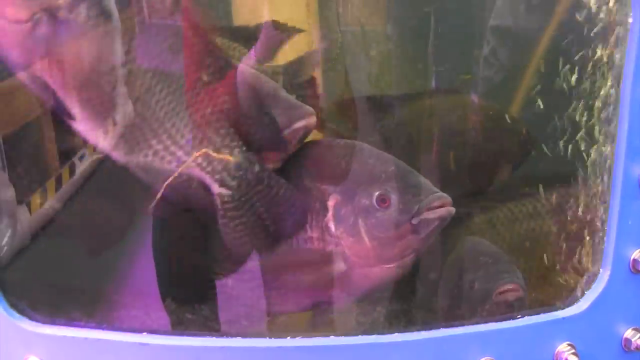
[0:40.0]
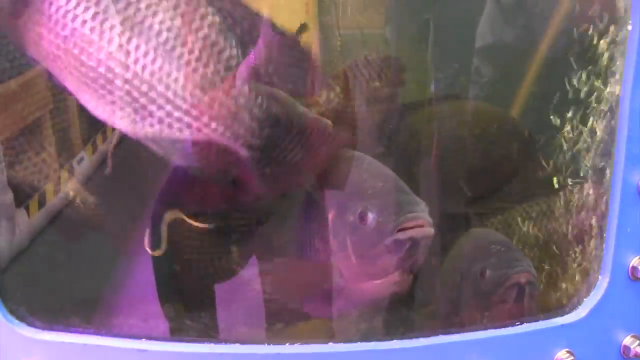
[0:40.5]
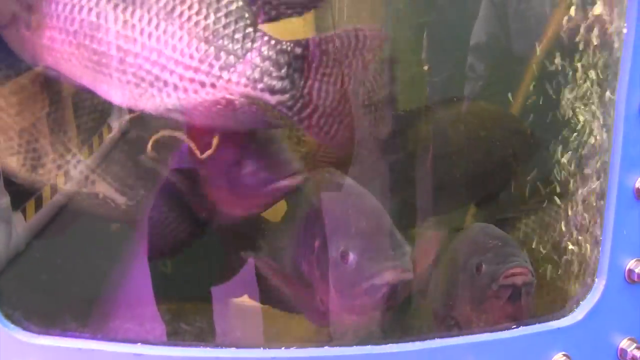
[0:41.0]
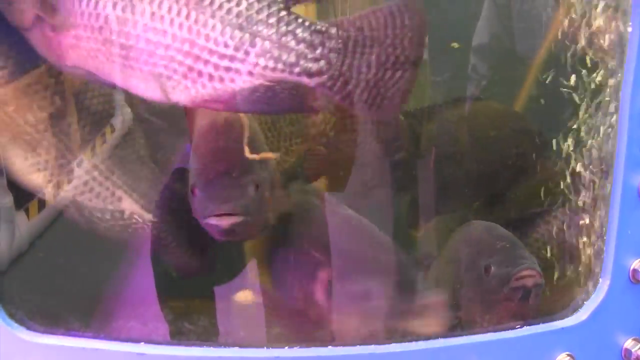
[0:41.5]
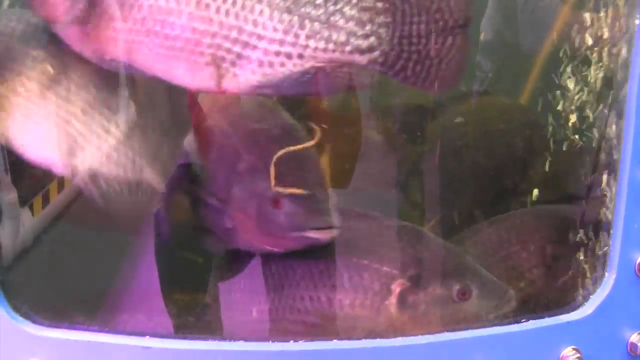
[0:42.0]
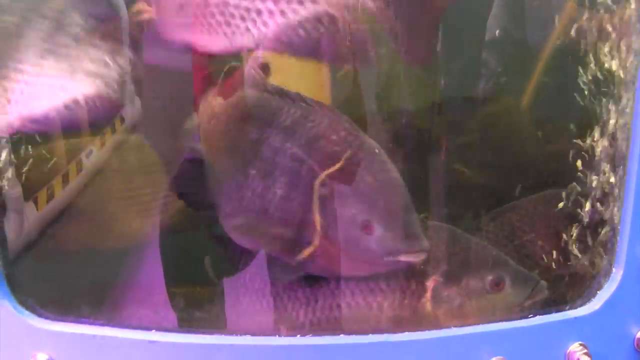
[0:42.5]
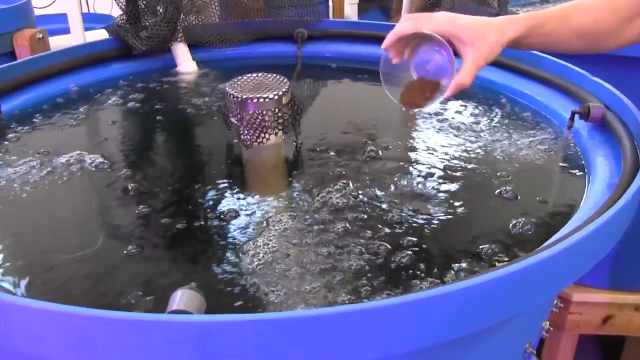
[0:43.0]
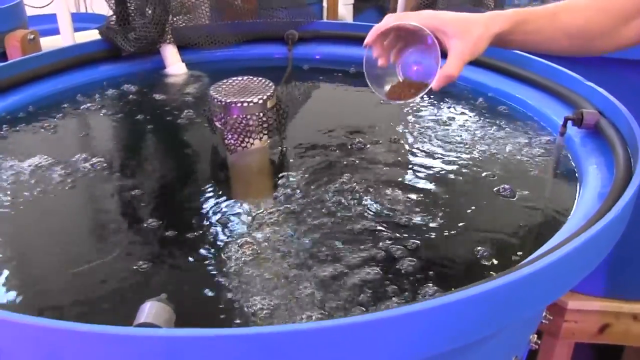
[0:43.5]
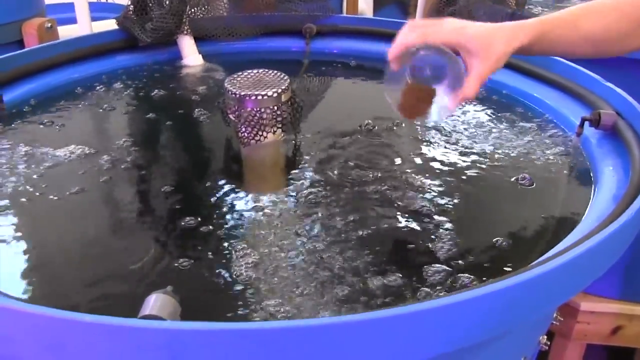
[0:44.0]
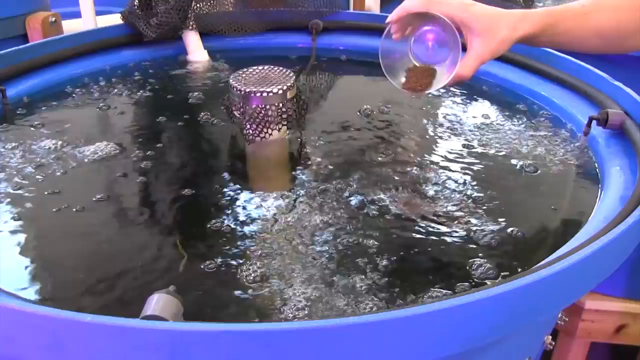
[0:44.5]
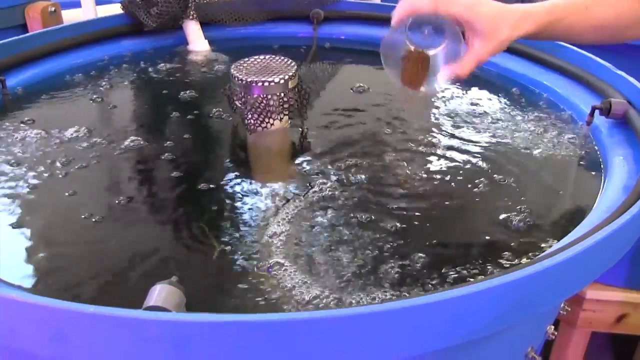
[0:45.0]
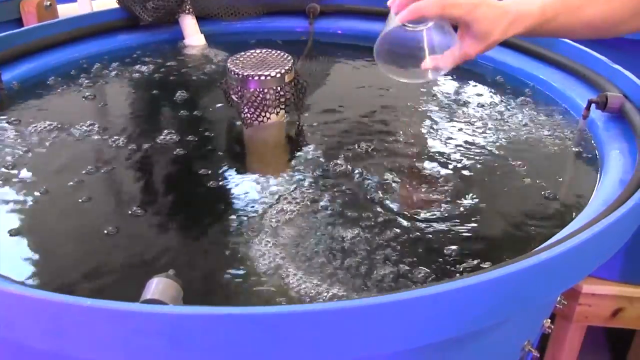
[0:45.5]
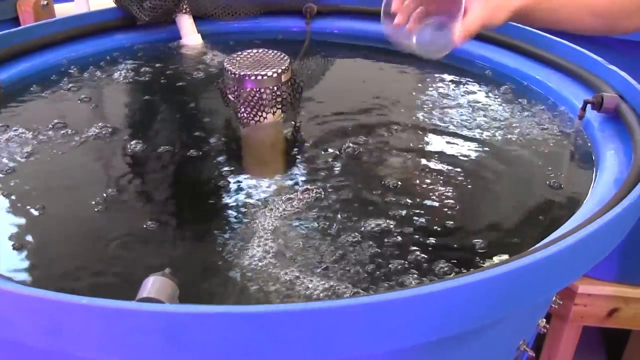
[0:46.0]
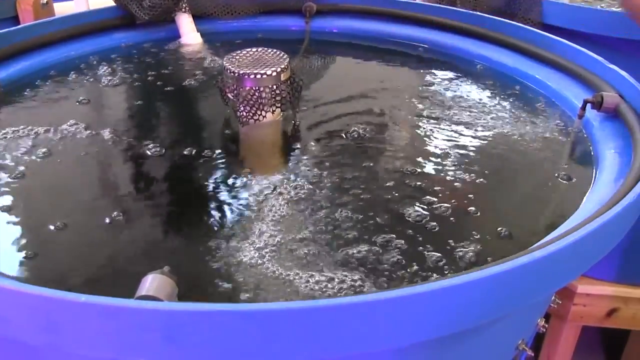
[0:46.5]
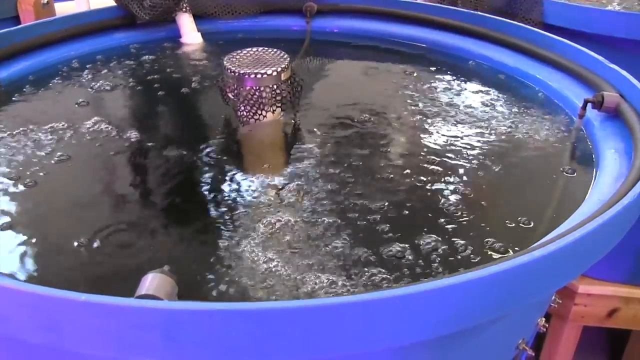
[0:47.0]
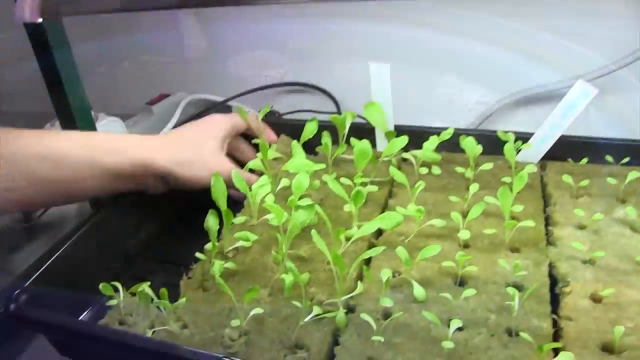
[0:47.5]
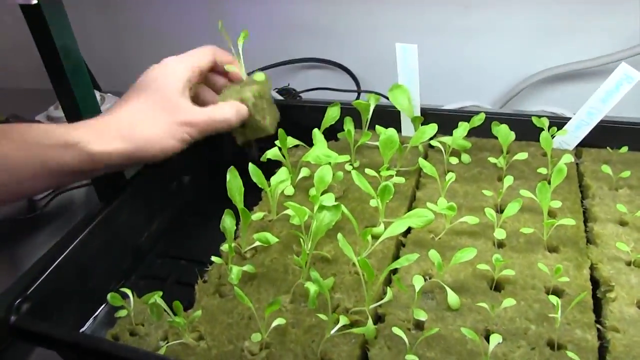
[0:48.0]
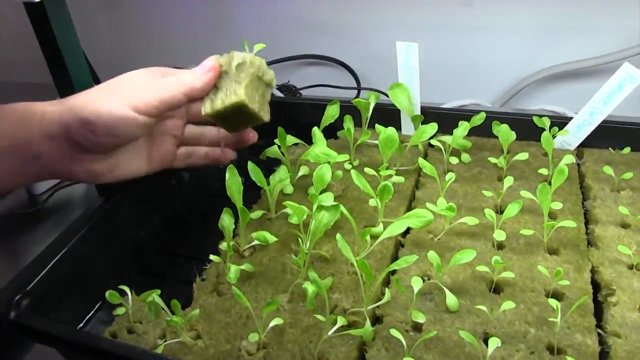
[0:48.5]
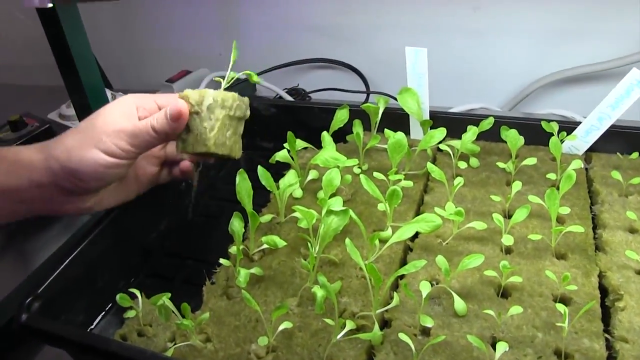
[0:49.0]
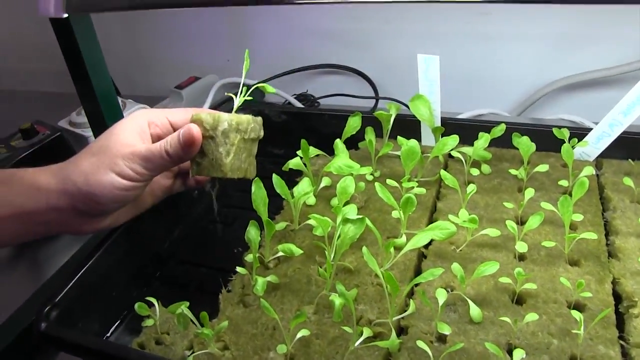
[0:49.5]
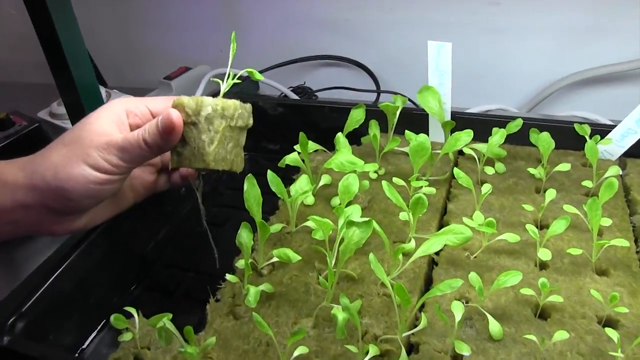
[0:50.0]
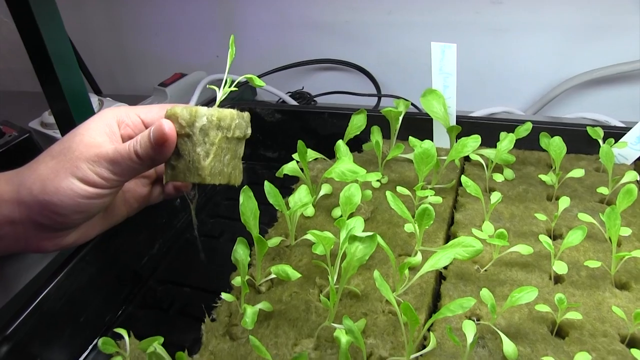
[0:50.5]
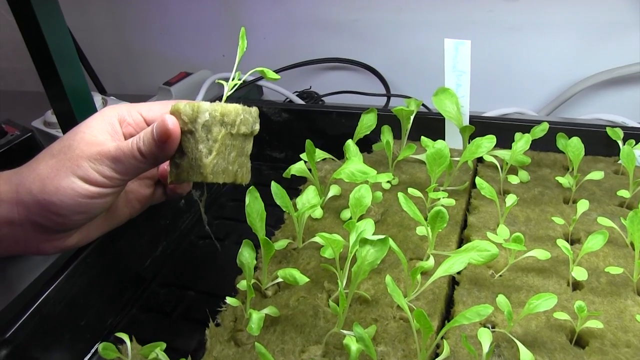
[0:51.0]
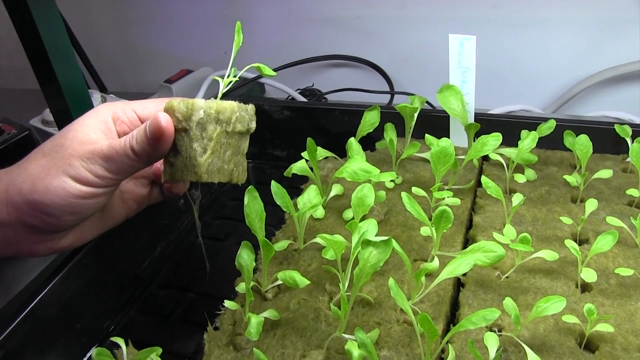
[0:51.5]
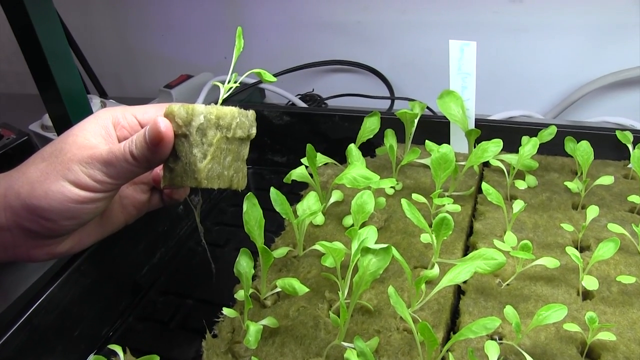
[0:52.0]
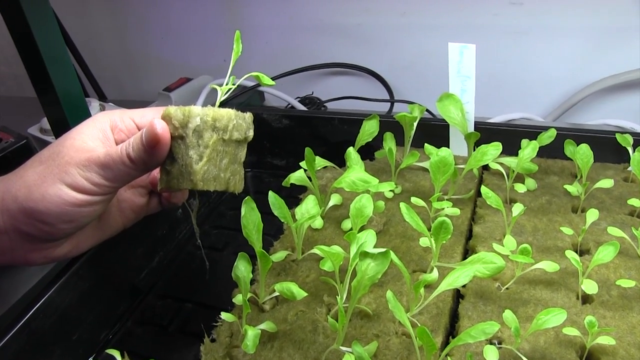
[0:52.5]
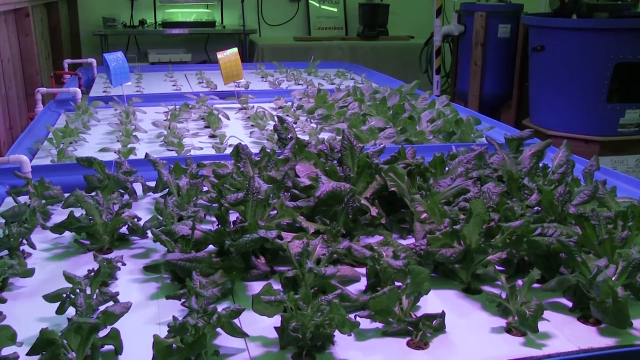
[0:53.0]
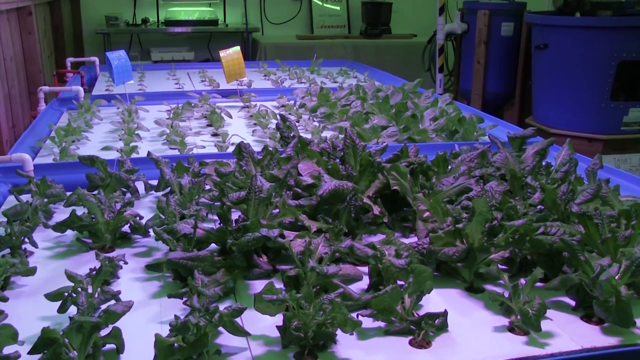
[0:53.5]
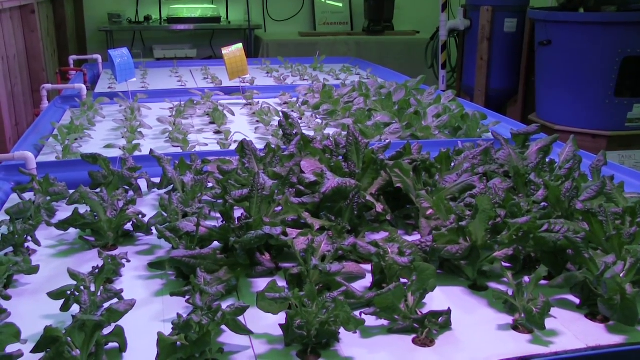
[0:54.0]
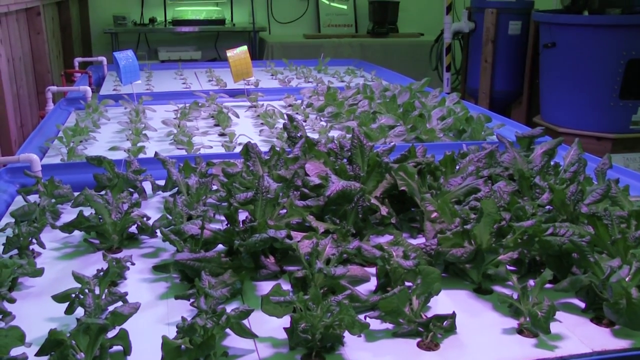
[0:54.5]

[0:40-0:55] A rough-looking black fish, apparently a kind of carp, is shown. The video cuts to one of the big blue plastic barrels with its top off. The water is somewhat dark, circulating and bubbling, and there are pumps in it. The employee's hand holds a big plastic cup and sprinkles brown fish food in from above. Next, a man's hand on the left side holds up what looks to be foam or some sort of nutrient substrate with small green plants, maybe about two or three inches tall, in rows poked into the foam or growth medium. A bigger tray of older plants follows; they float flat in rectangular trays and are maybe about six inches high. The two trays next to it are slightly less grown: the closest tray has the most growth, the one behind it less, and the one behind that even less. The trays rest on white foam in big blue bins.